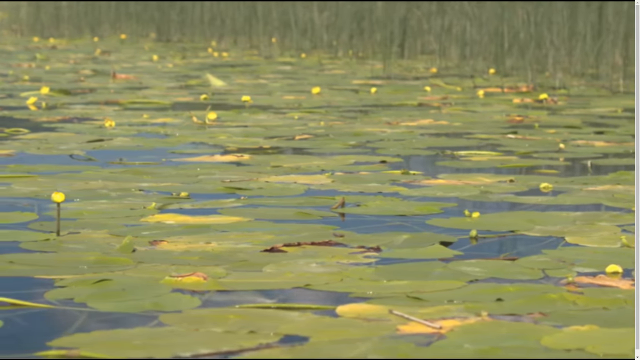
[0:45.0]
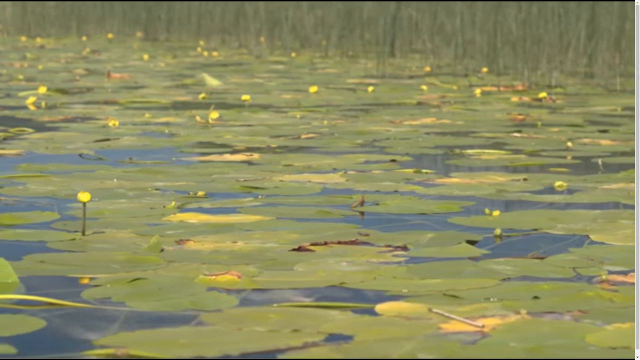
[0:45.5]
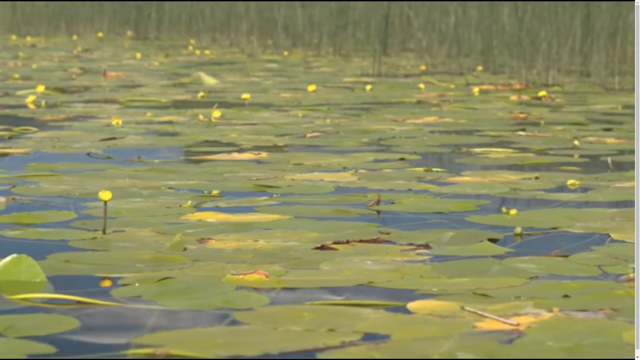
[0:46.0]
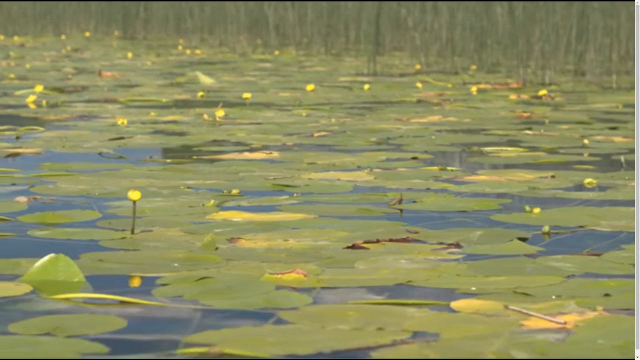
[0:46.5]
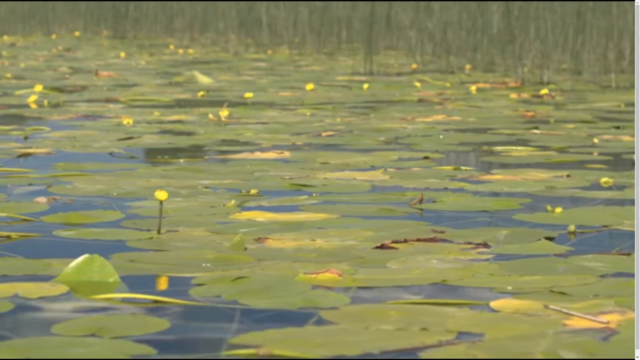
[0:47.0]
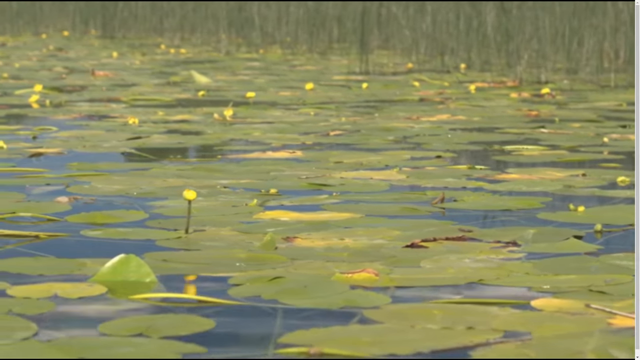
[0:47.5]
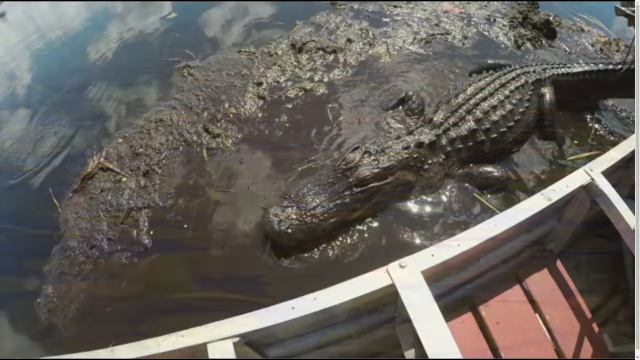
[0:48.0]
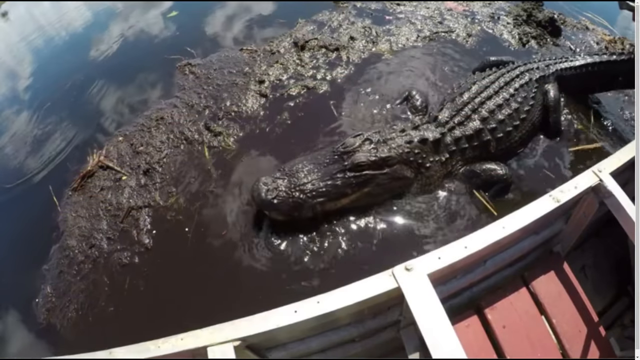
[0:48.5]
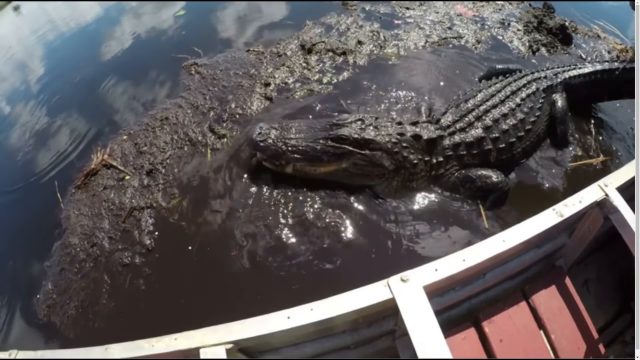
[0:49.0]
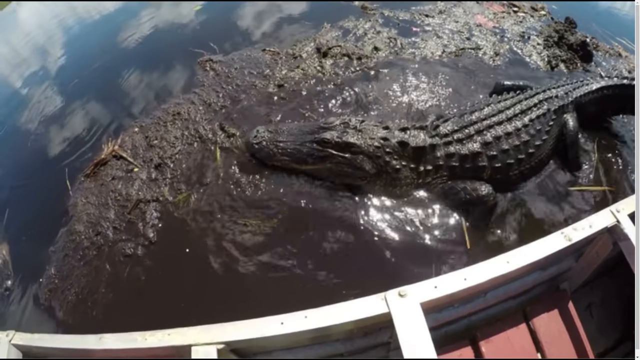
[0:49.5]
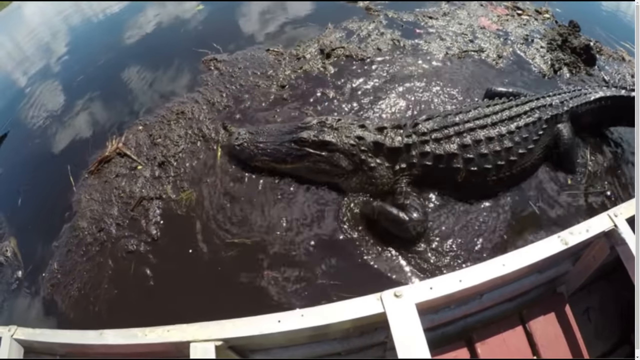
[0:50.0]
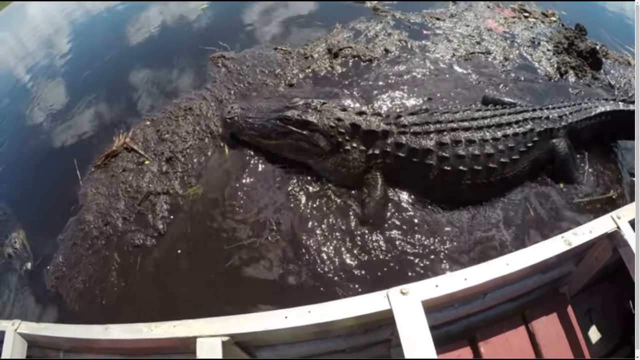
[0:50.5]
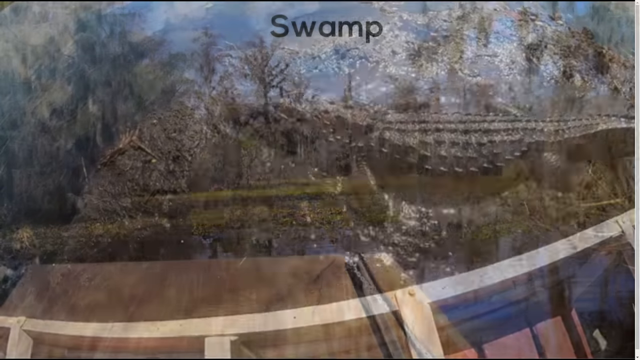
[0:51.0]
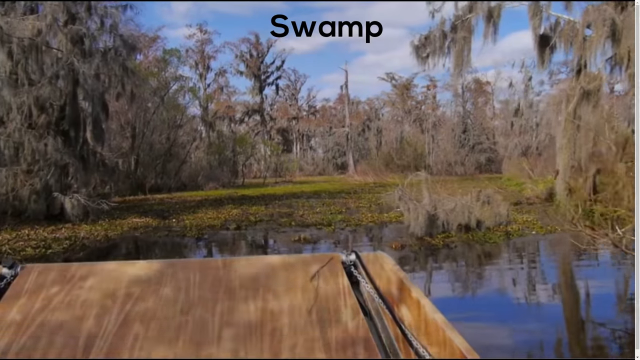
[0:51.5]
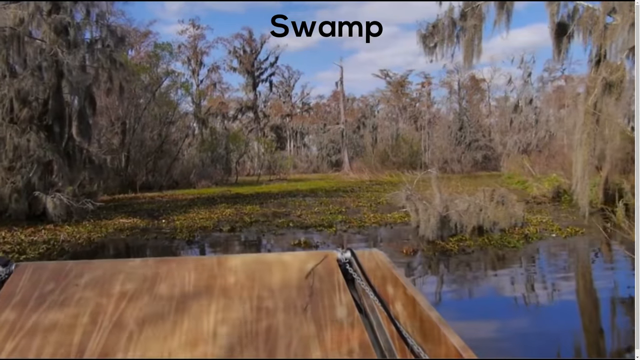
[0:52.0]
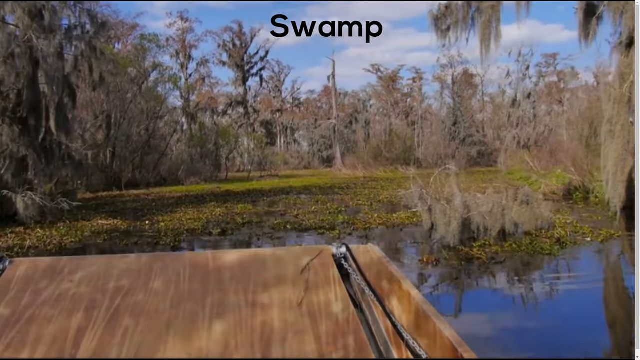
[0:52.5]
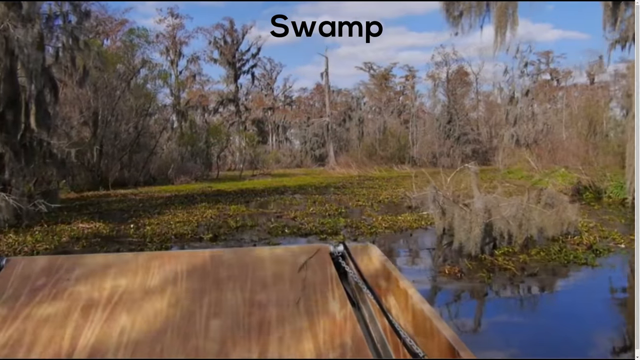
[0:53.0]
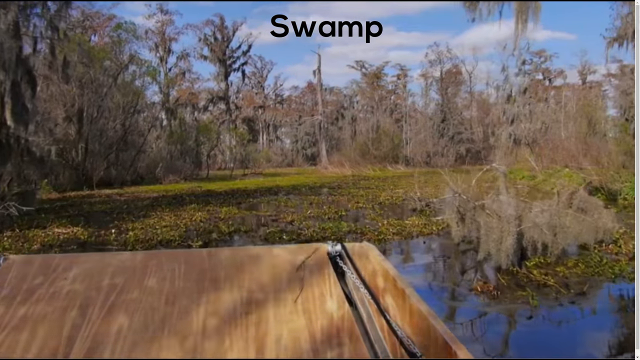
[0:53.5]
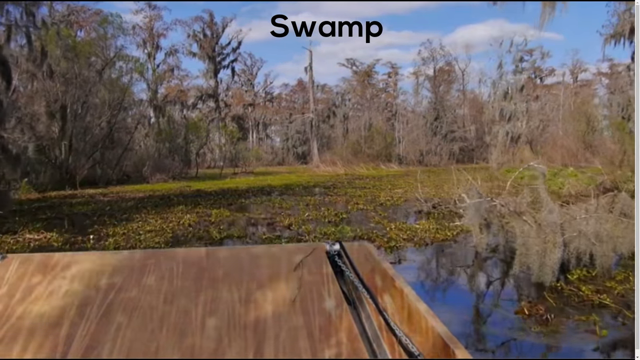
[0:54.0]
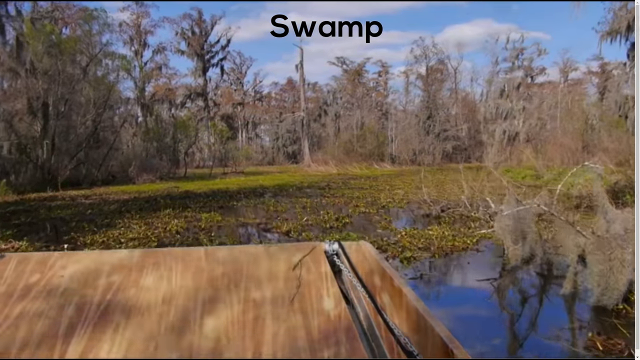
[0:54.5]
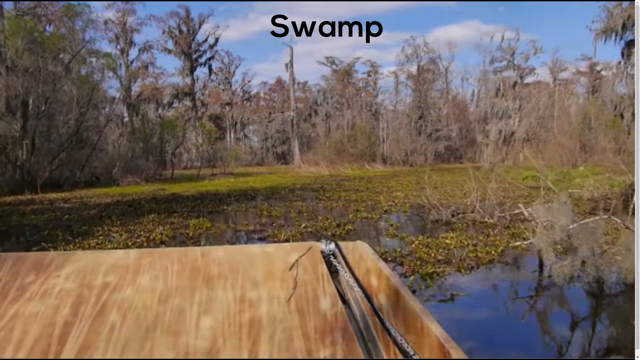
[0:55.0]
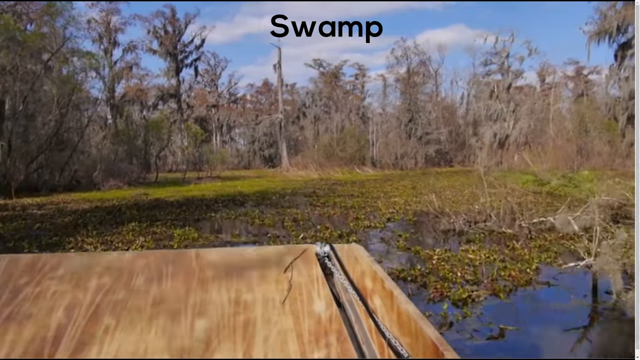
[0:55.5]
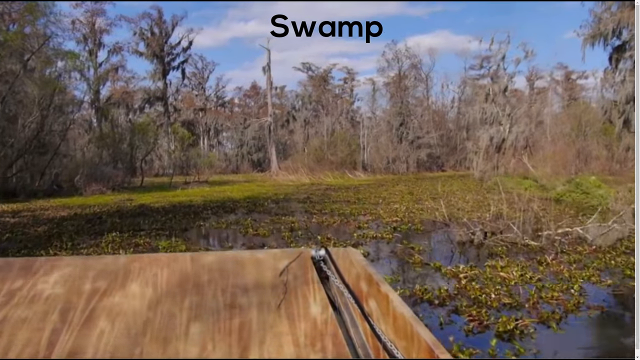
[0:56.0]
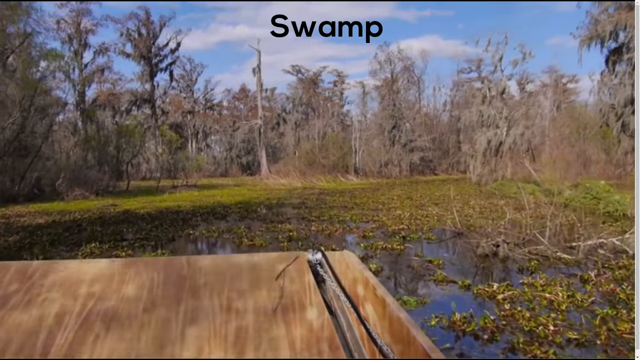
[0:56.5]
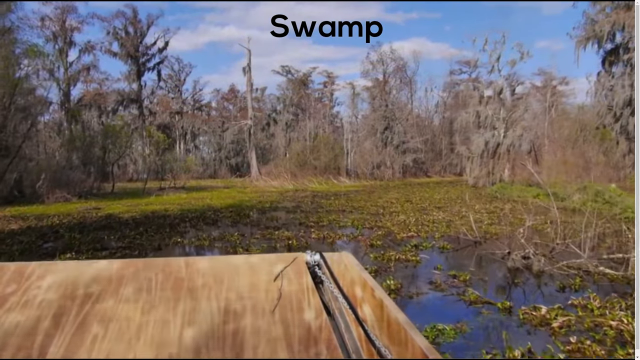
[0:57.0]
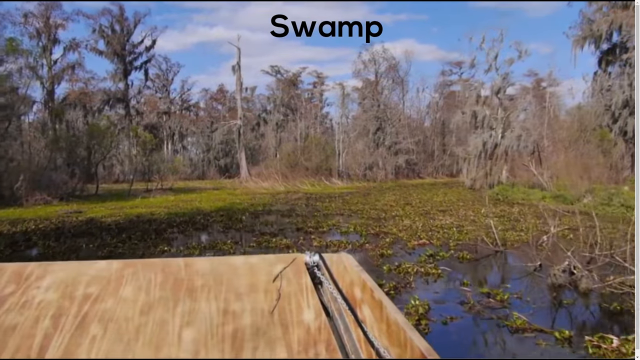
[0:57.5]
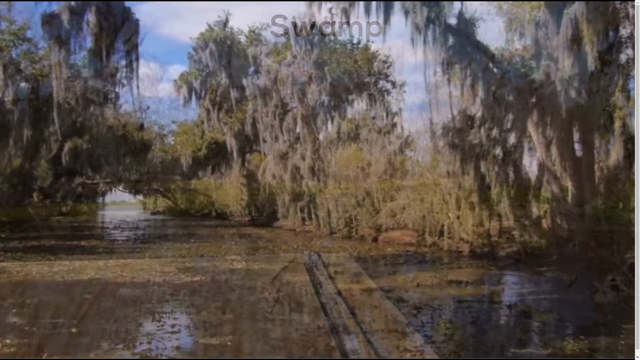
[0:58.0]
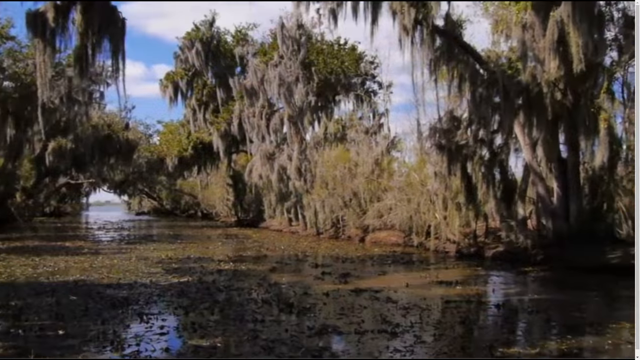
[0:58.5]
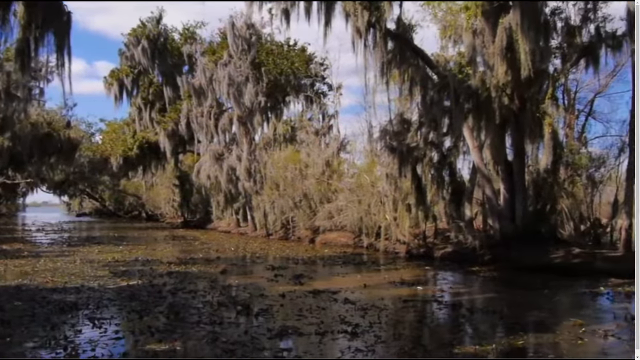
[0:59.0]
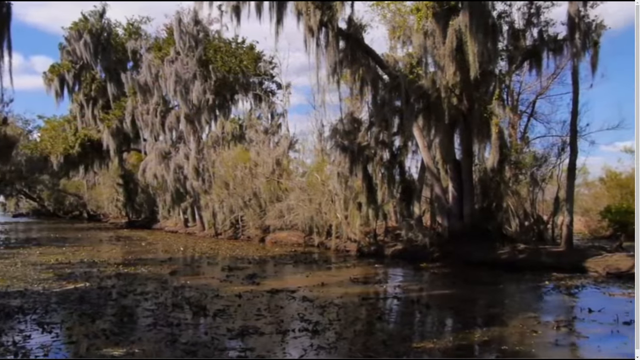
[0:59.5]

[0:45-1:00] Lily pads sit above the water. The scene transitions to an alligator, this time kind of swimming through the water a bit instead of crawling, in swamp water or a container with swamp water in it; the focus seems to be on swamps. After the alligator, a depiction of a swamp appears with the word "swamp" titled above it. The person recording rides in what seems to be a brown boat through a swamp. Trees have moss trailing all over them, plenty of moss grows on top of the water the boat travels through, and different plants form on top of the river.